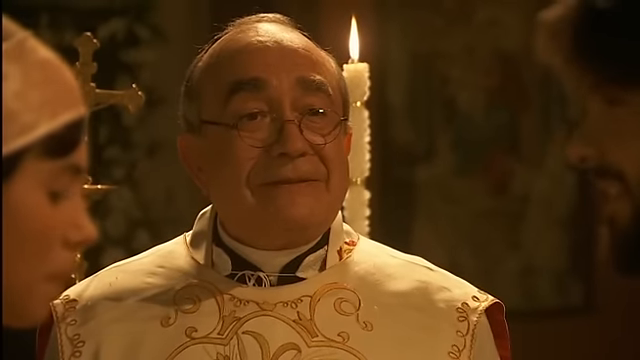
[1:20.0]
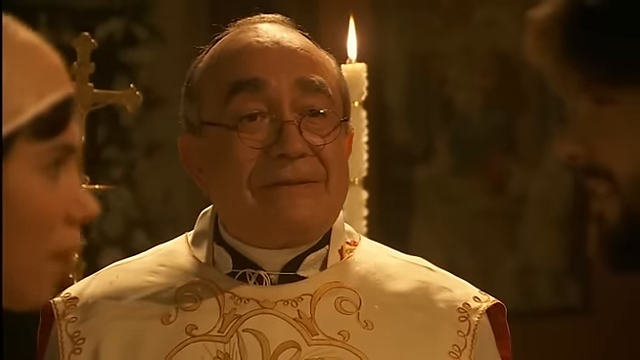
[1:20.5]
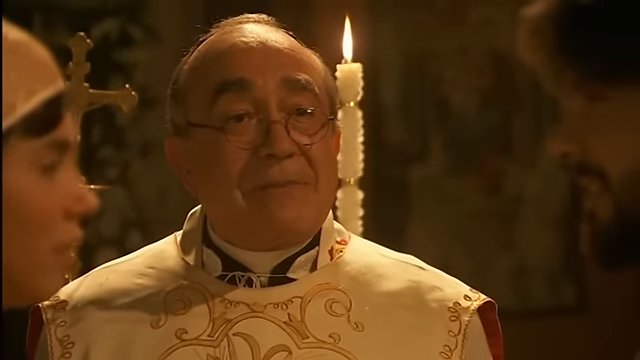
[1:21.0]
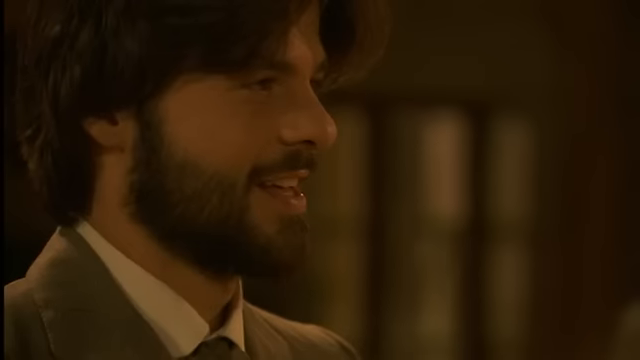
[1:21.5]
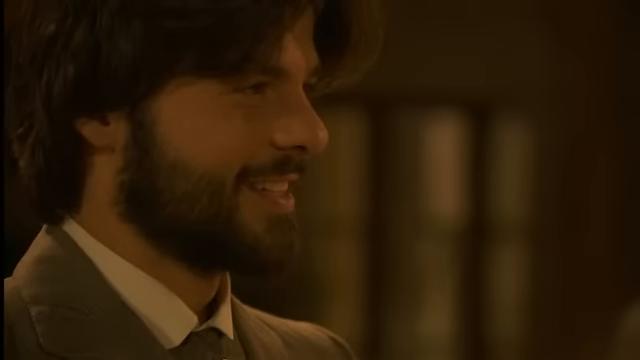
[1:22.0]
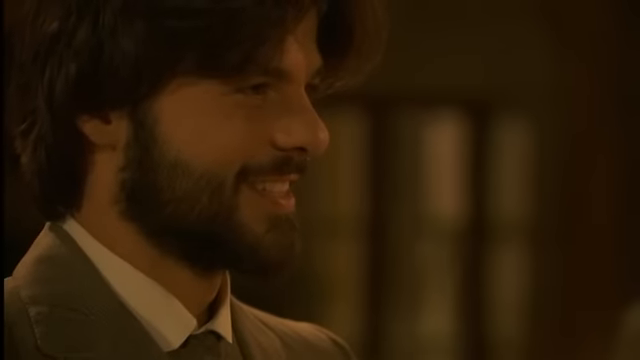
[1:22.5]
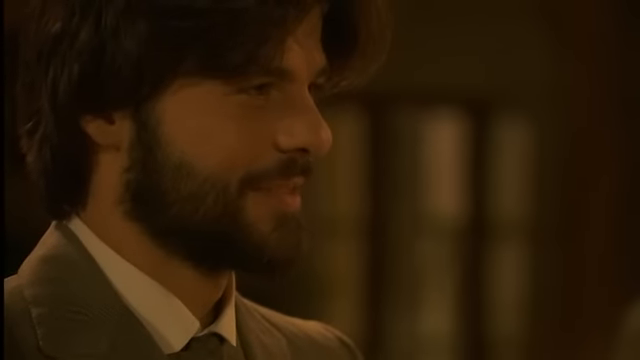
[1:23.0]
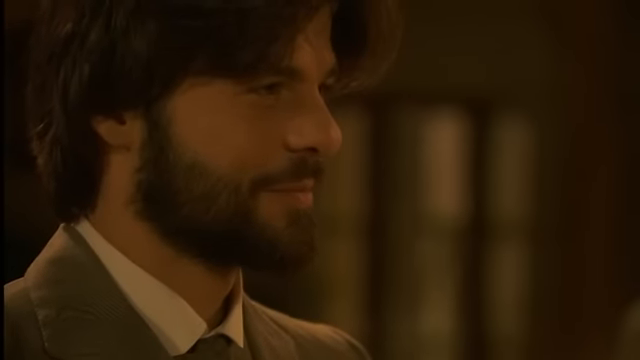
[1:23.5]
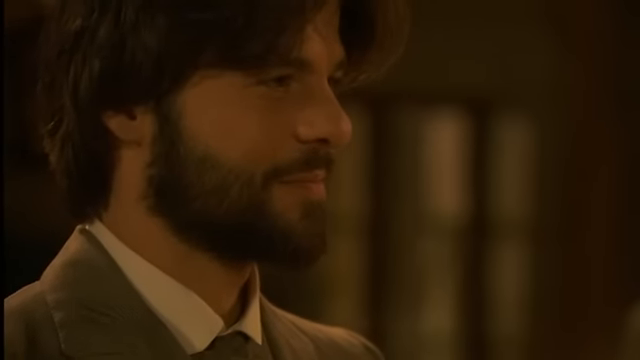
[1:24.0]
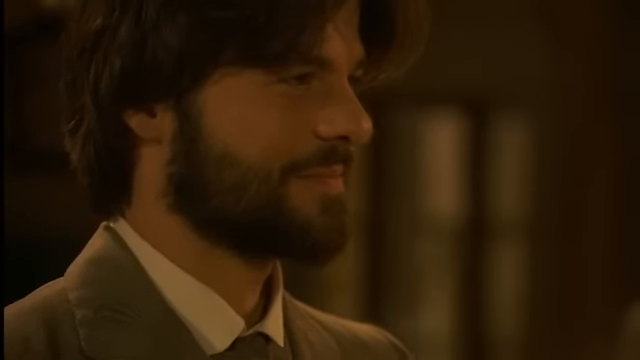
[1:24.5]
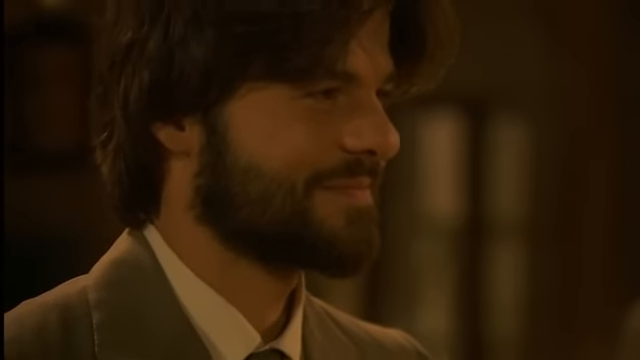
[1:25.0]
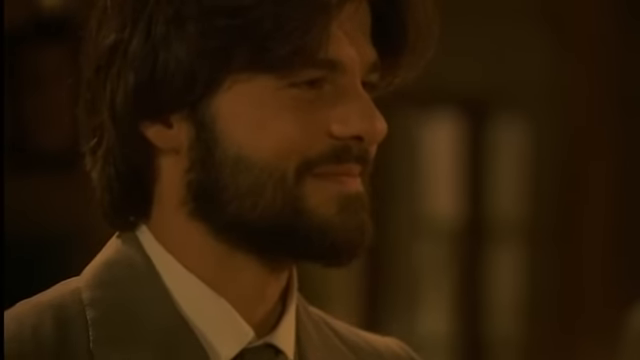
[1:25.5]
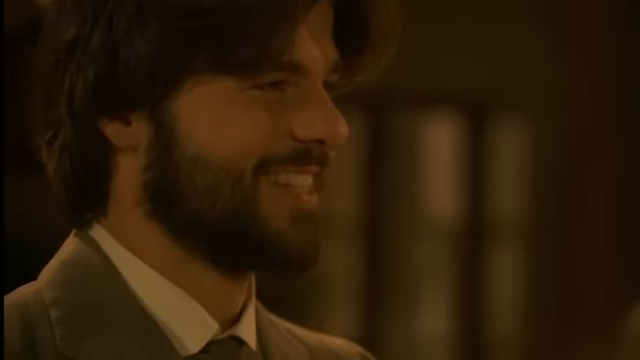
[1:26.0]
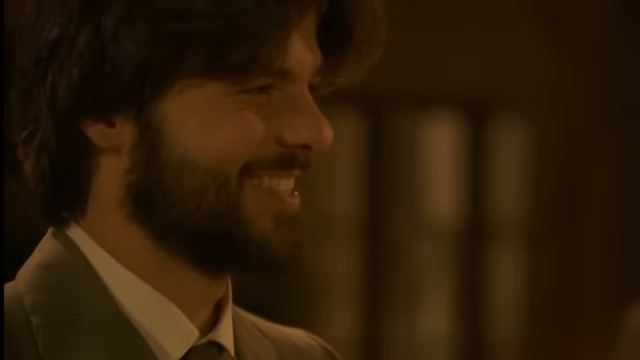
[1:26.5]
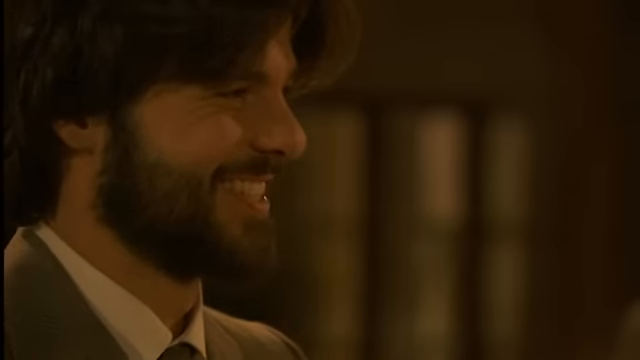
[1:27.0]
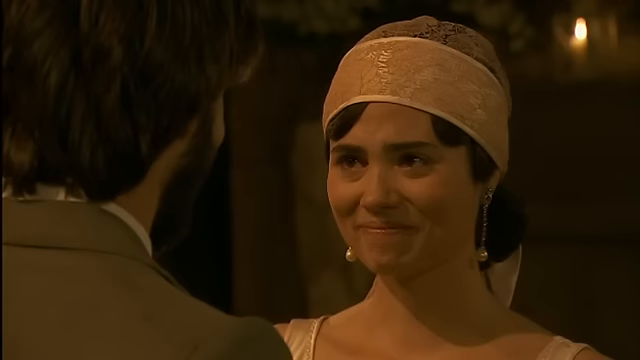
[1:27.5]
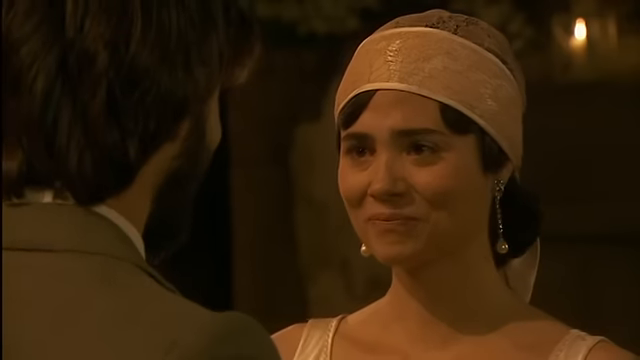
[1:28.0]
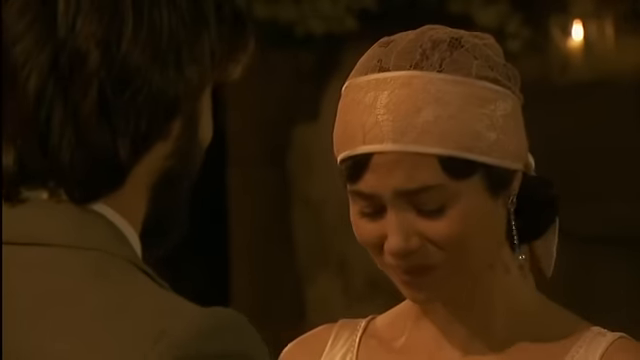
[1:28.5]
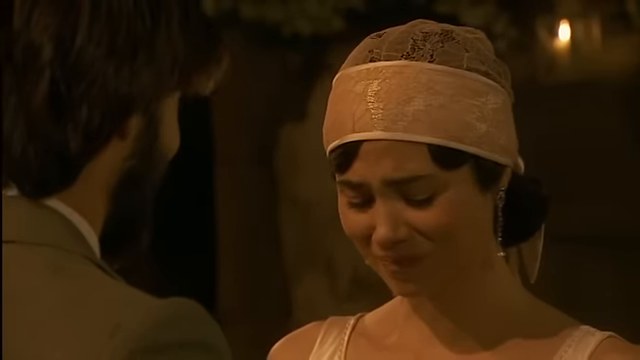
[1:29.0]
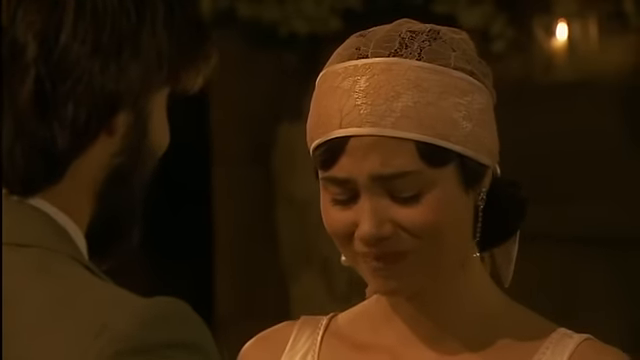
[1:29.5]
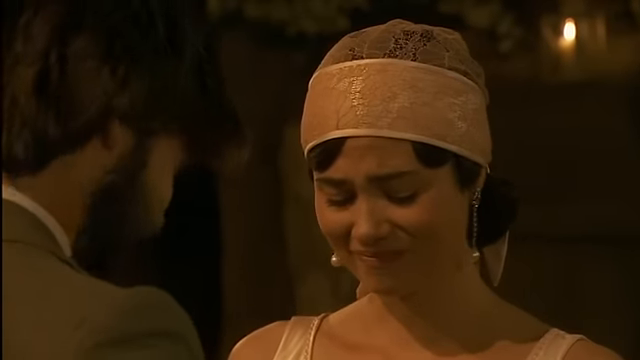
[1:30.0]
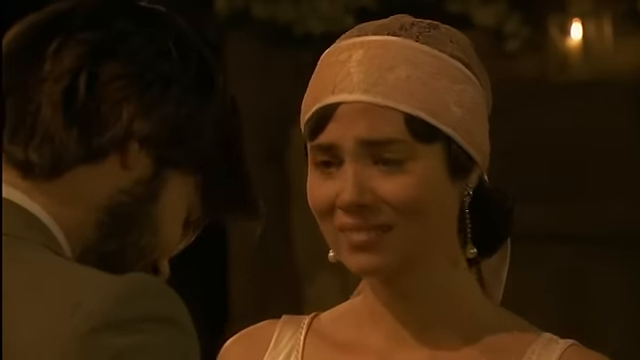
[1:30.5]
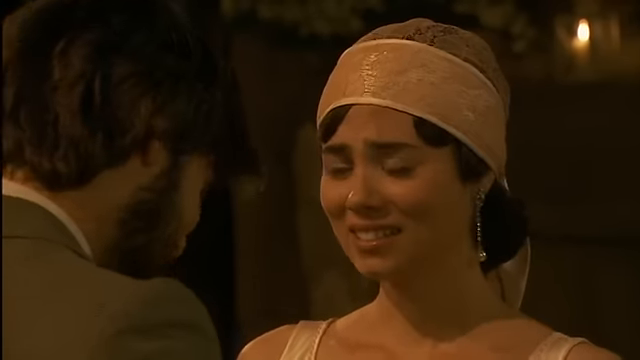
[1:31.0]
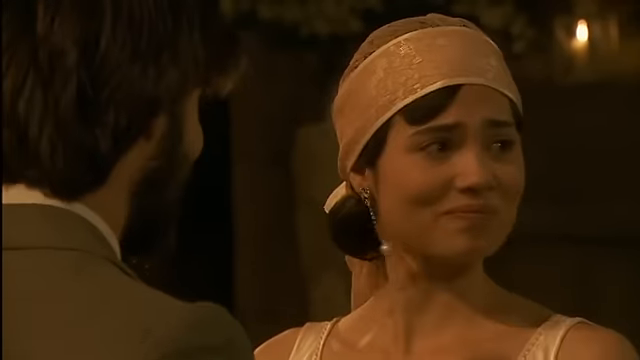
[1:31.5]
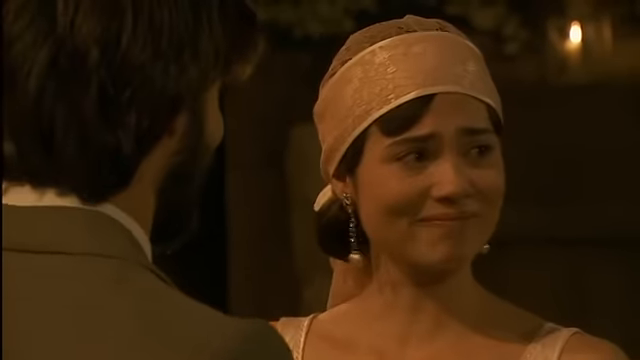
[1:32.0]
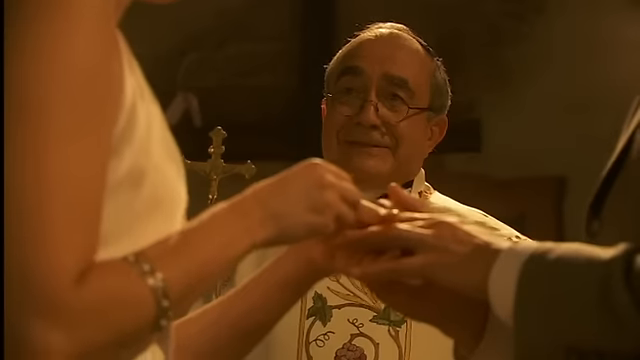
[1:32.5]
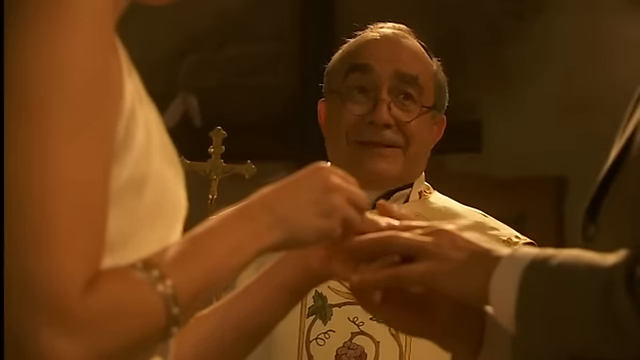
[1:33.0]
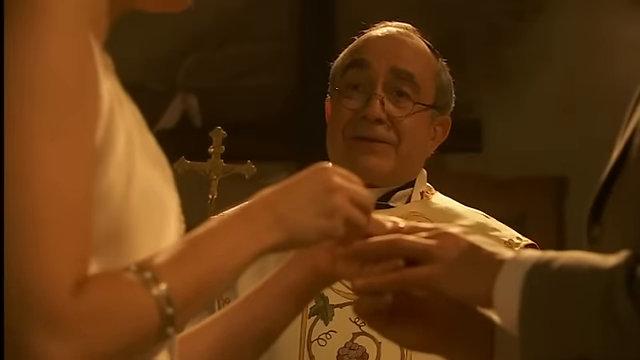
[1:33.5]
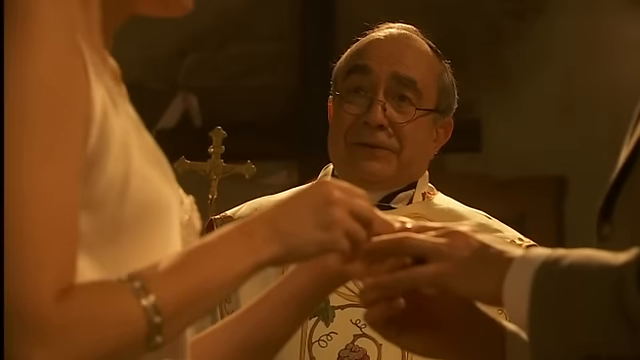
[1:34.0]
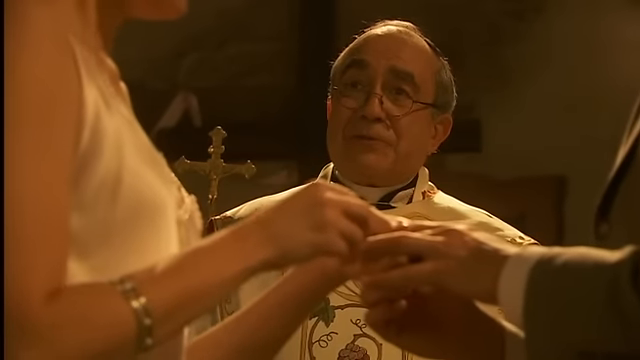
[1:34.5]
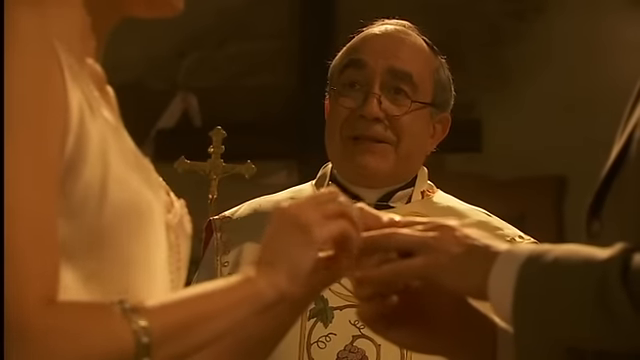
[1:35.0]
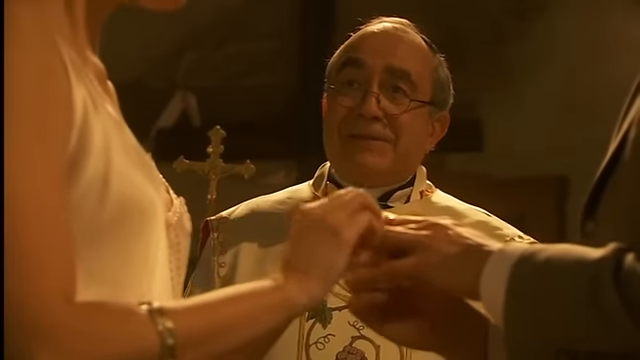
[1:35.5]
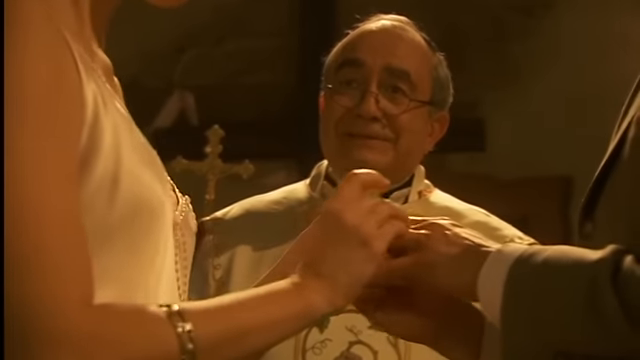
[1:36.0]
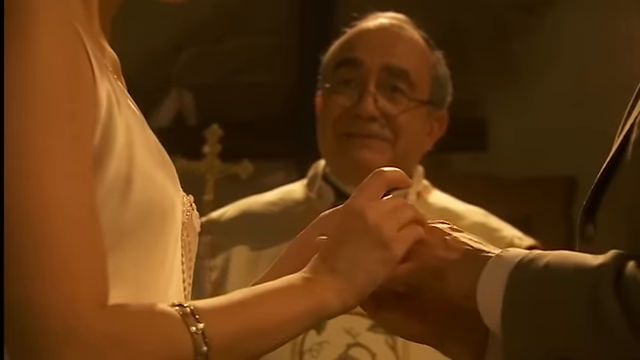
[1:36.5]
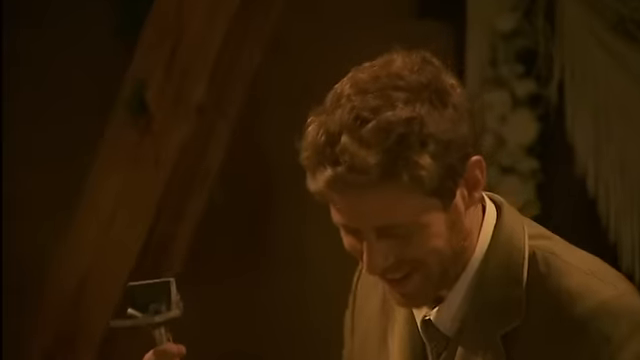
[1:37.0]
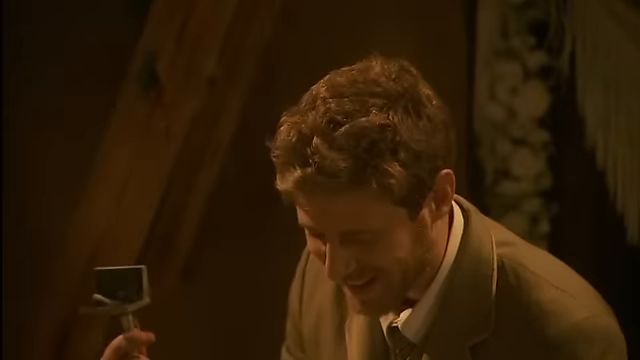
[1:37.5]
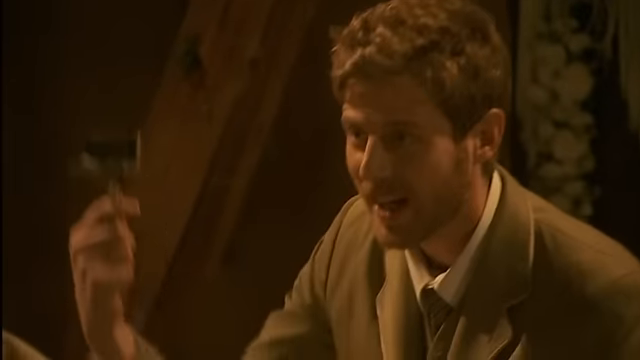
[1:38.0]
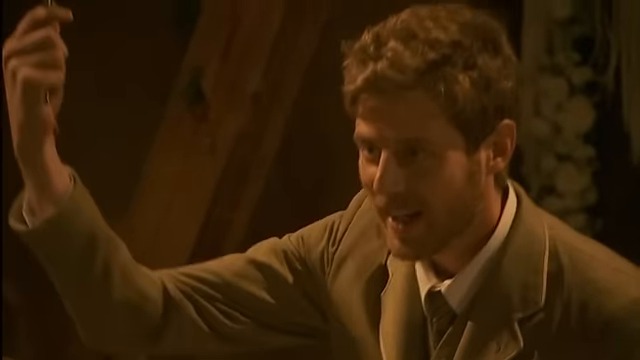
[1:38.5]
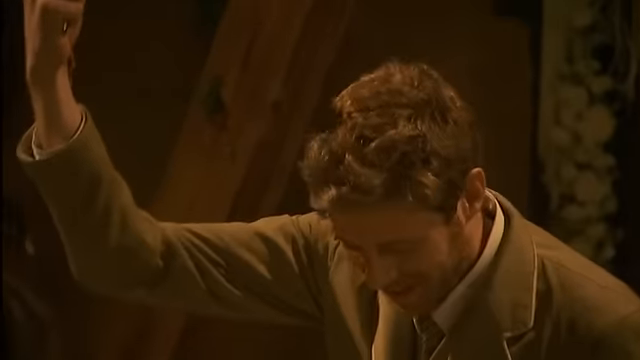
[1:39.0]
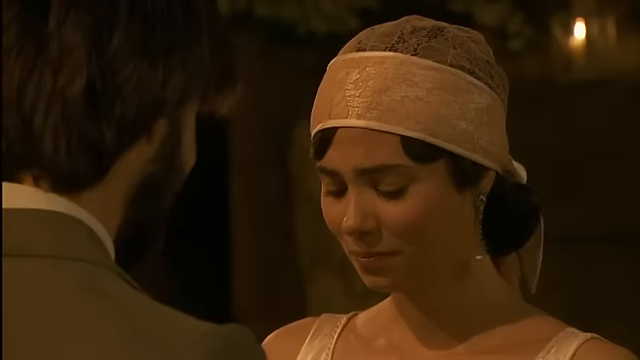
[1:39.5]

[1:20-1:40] The priest talks to what looks to be the bride and groom. The groom says "I do," and the bride also says "I do," as they switch rings in the middle of the church in the presence of their family. She starts to cry as they put the rings on each other's fingers. The priest reassures them that they are wed, and someone in the background, a photographer with an old-school camera with a photo flash, starts getting down on one knee to take a picture of the couple exchanging rings at the front of the church.